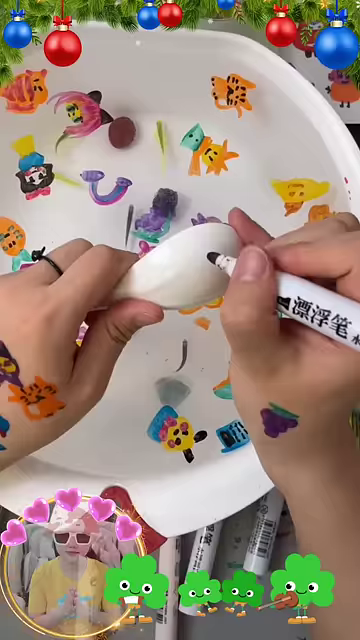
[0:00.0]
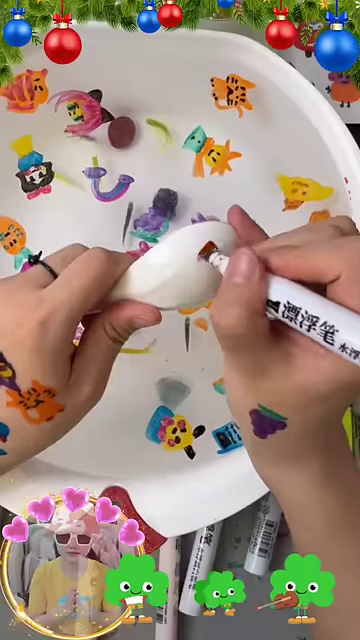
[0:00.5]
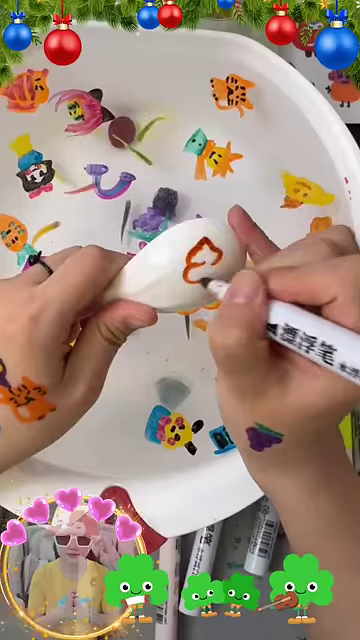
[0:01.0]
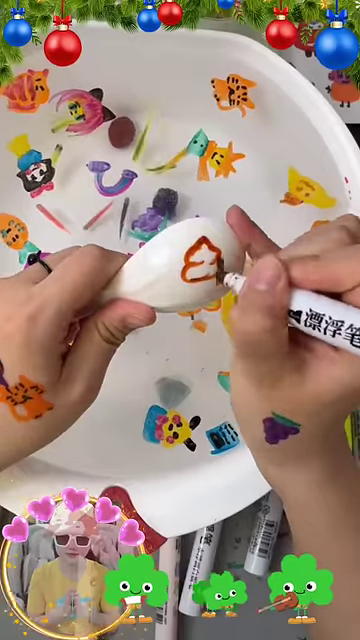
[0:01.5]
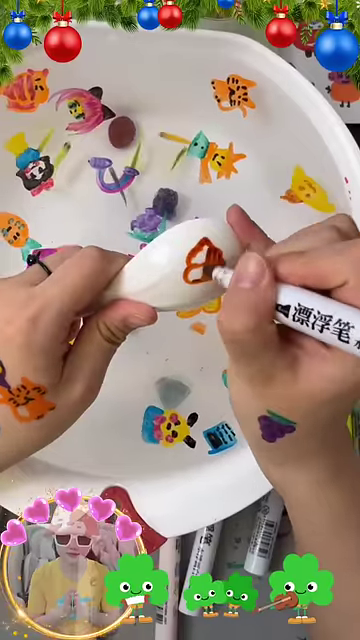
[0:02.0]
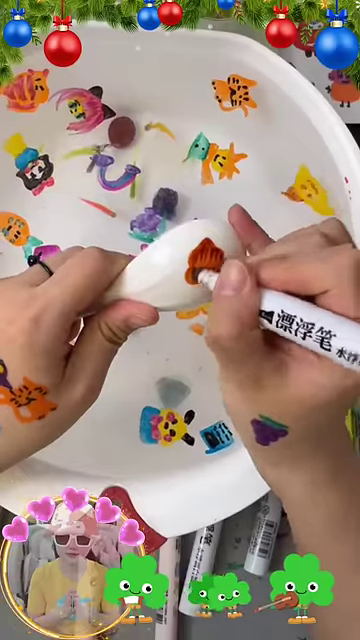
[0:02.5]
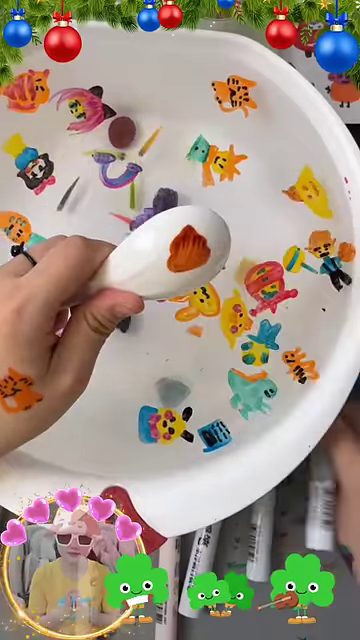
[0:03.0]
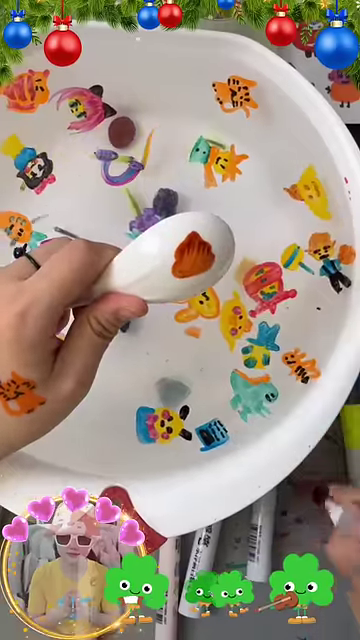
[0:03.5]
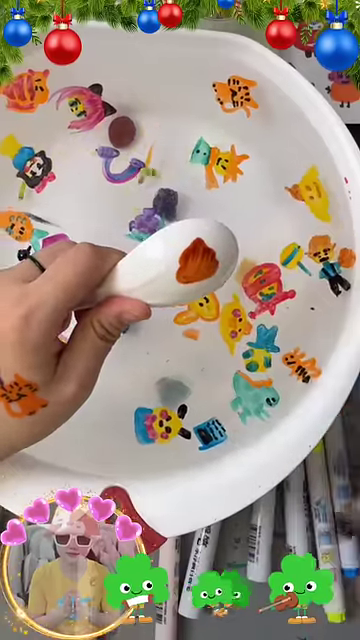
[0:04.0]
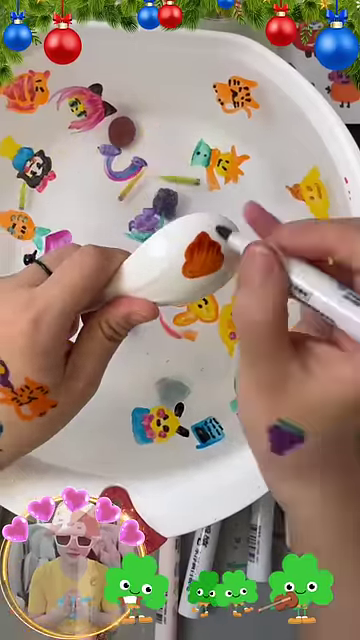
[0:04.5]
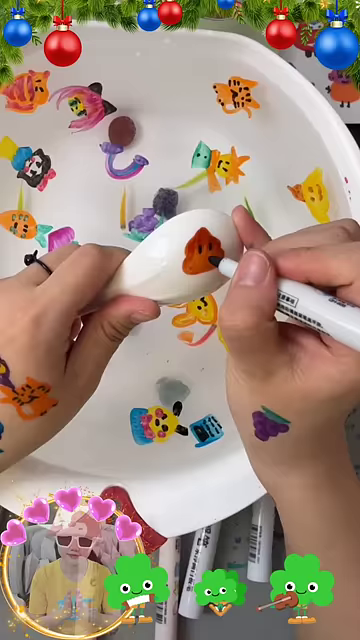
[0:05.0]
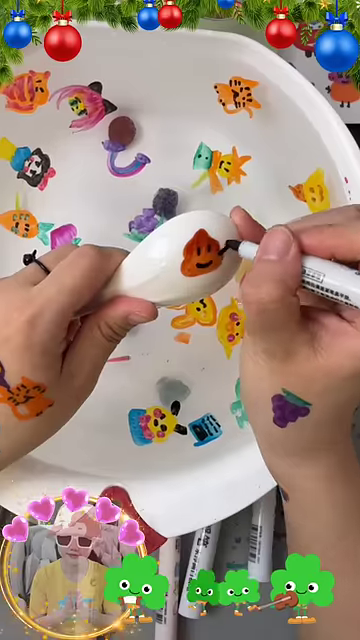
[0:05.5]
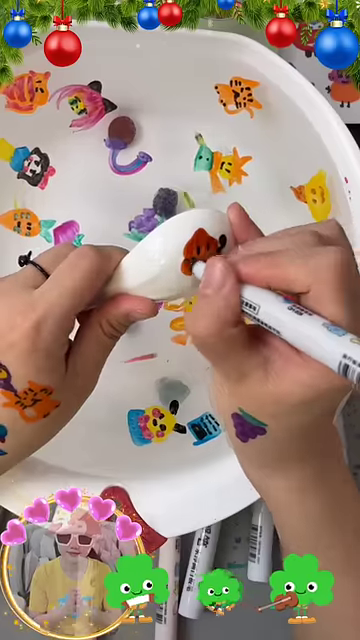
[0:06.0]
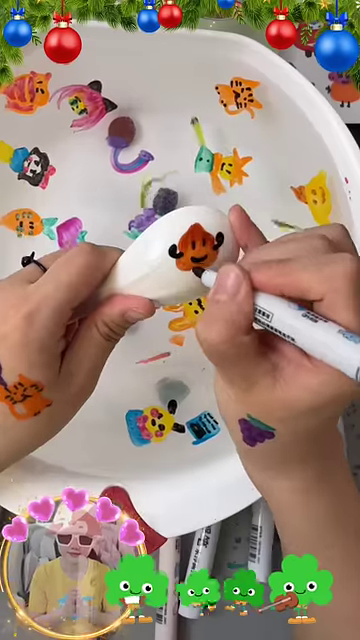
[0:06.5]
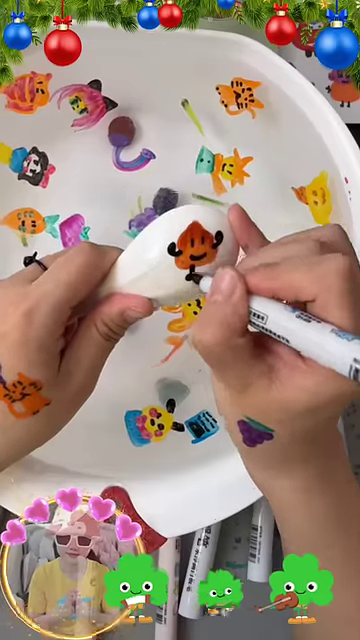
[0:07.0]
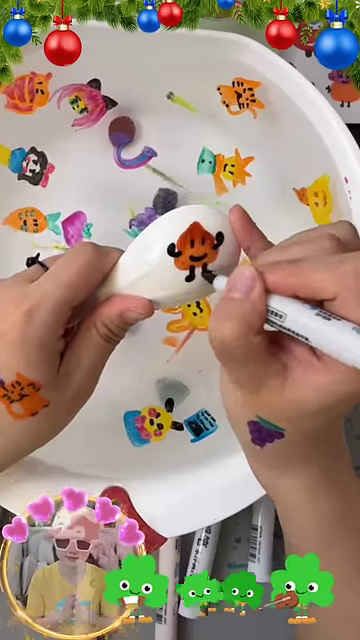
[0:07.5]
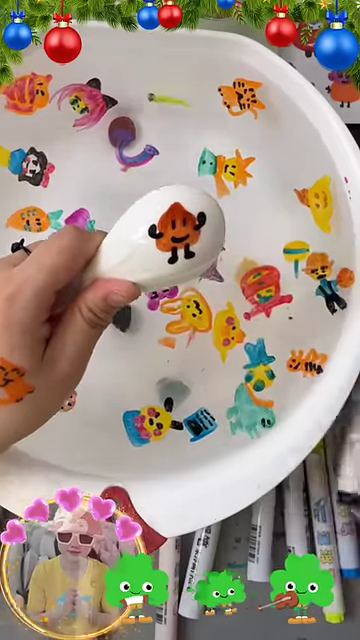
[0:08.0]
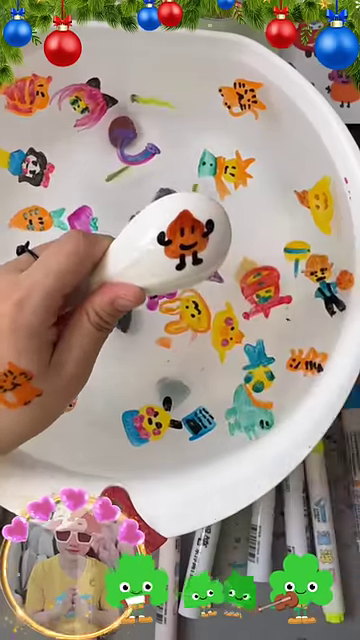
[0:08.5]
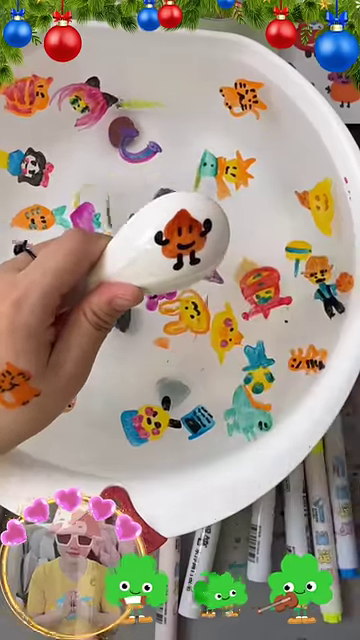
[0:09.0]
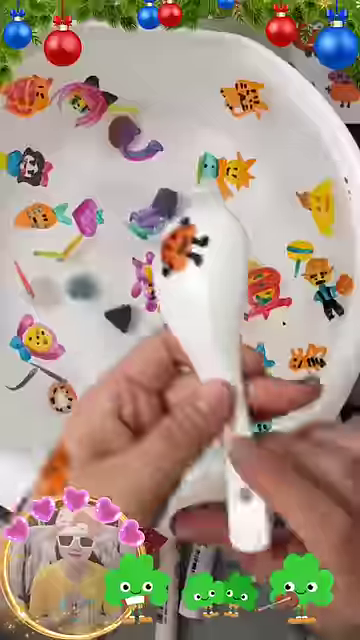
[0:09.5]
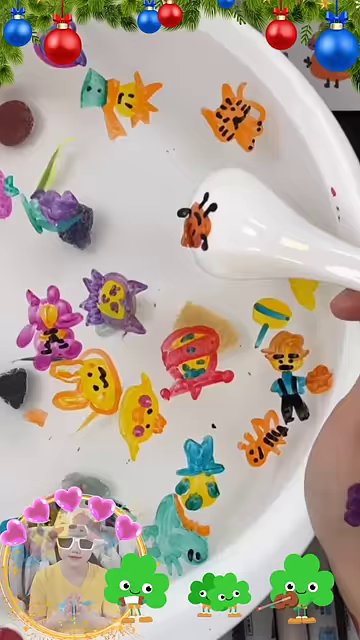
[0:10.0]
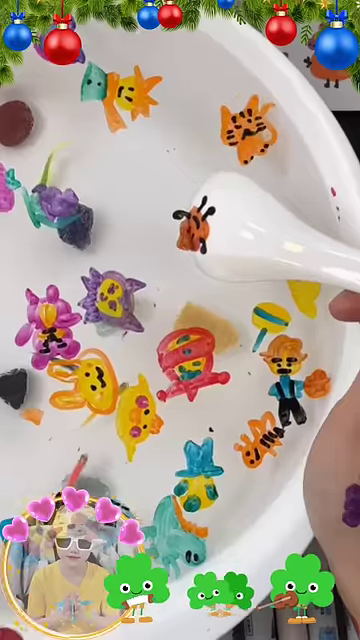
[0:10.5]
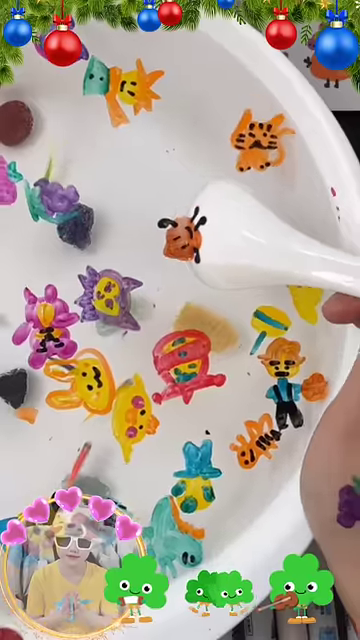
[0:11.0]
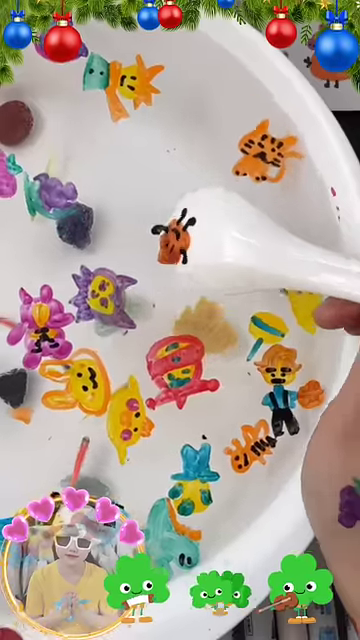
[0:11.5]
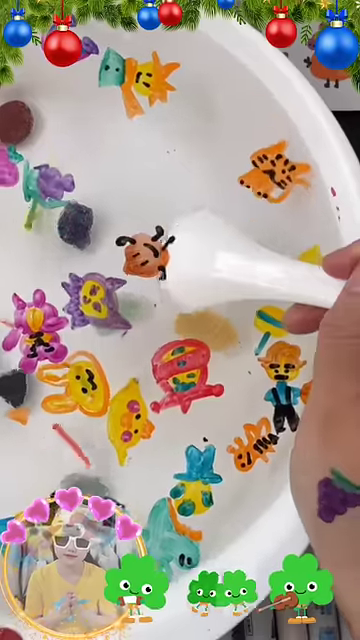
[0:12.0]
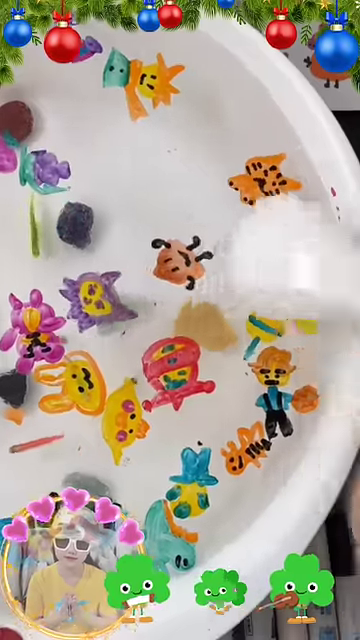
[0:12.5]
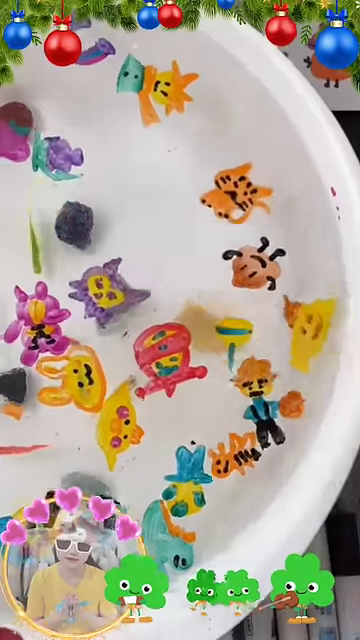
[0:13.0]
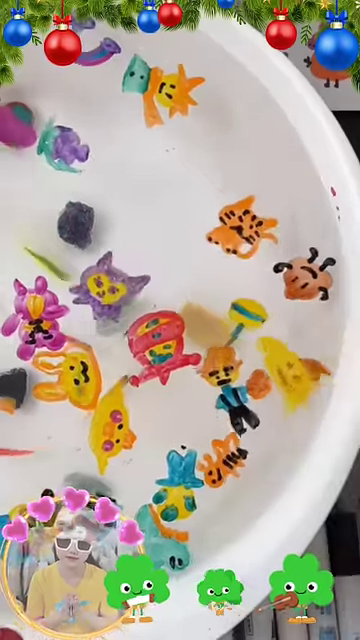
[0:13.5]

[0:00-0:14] A hand, apparently a girl's since a ring is visible on it, is decorating a plastic bowl using very large markers that have some Chinese writing on them, Mandarin or something similar. She has a white plastic spoon that looks like a miso spoon, shallow but long, and there are little designs drawn on her hand, probably with the same marker. On the back of the white spoon she draws the poop emoji, then adds two little arms and a smiley face with the black marker. She seems to let it sit for a second. Underneath her is a large white bowl that looks like a plastic bowl filled with water, with about four or five tiny tadpoles or minnows, some green and some orange, swimming around in it. As soon as she lowers the miso spoon into the bowl, the drawing that looks 2D suddenly becomes like a 3D object and starts floating around like a piece of plastic, along with other shapes, creatures and little funny drawings she has made, all floating in the bowl. Animated overlays show four-leaf clovers playing in a band at the bottom of the screen and Christmas ornaments at the top. The video appears to be a silly, fun arts-and-crafts demonstration of markers that turn drawings into plastic.